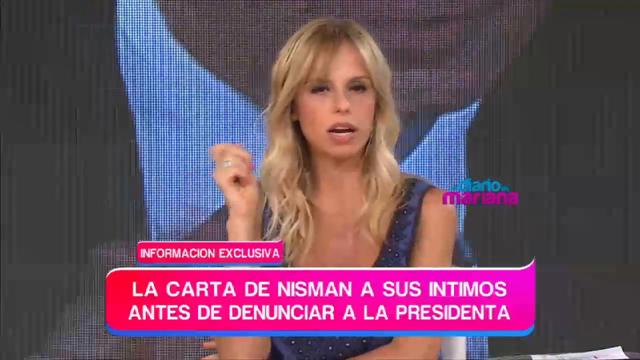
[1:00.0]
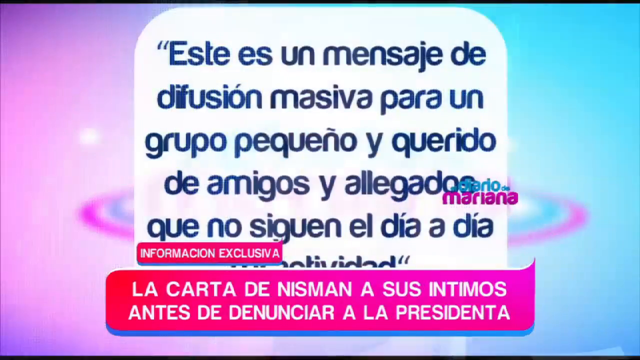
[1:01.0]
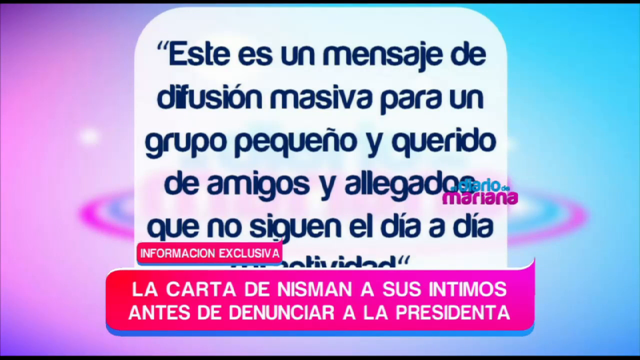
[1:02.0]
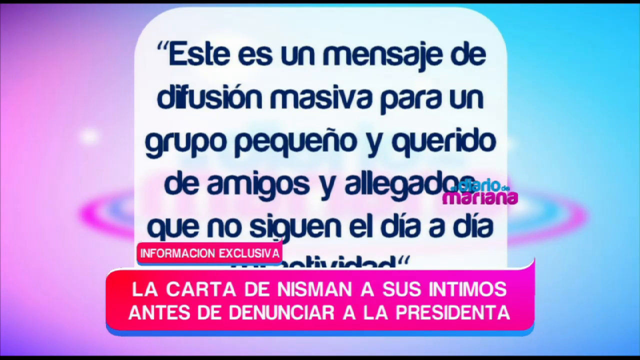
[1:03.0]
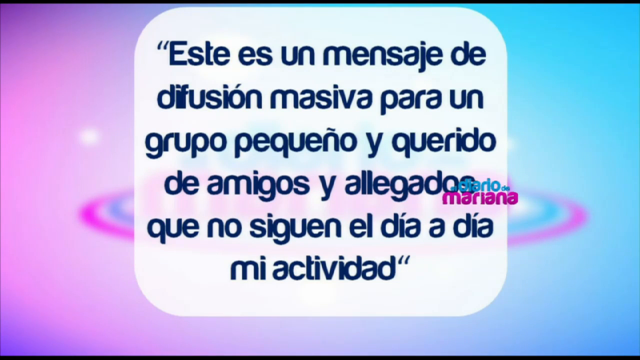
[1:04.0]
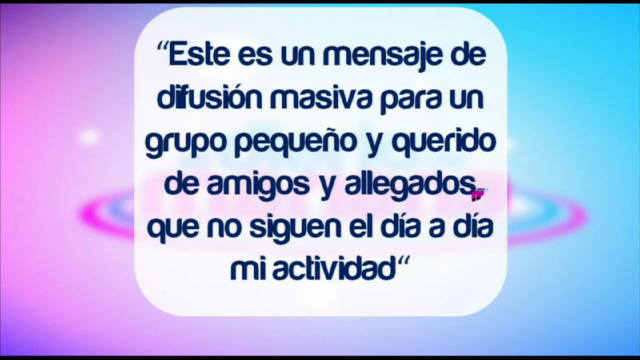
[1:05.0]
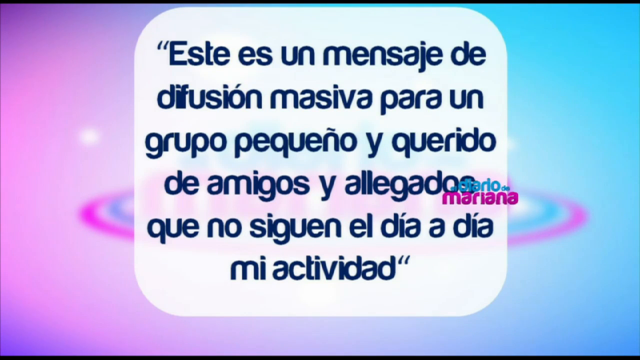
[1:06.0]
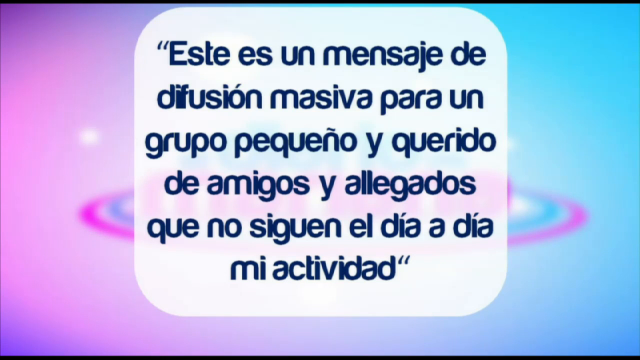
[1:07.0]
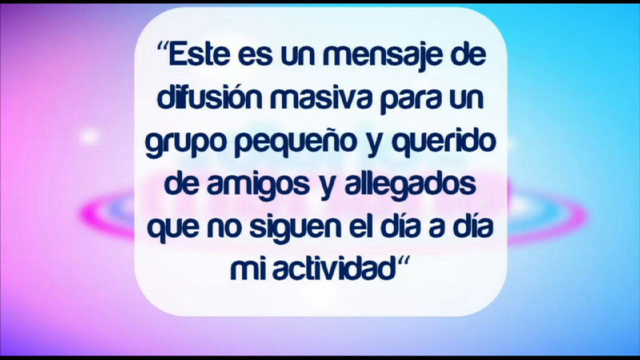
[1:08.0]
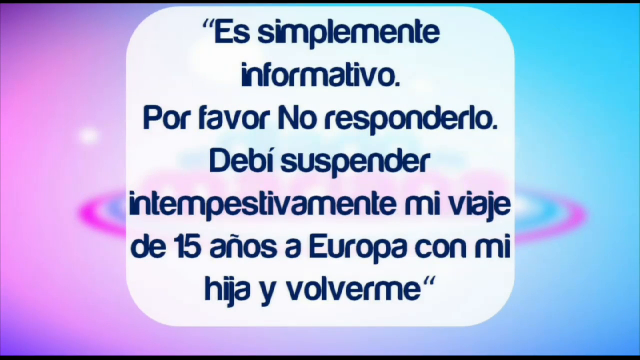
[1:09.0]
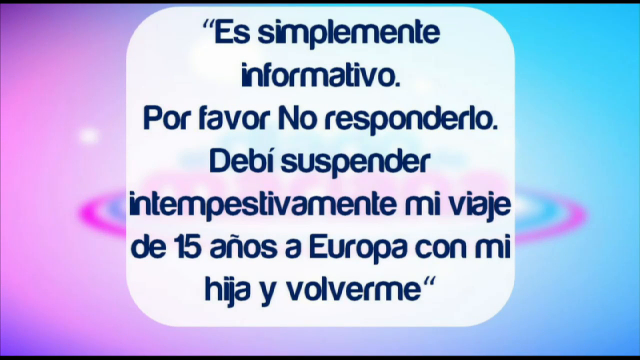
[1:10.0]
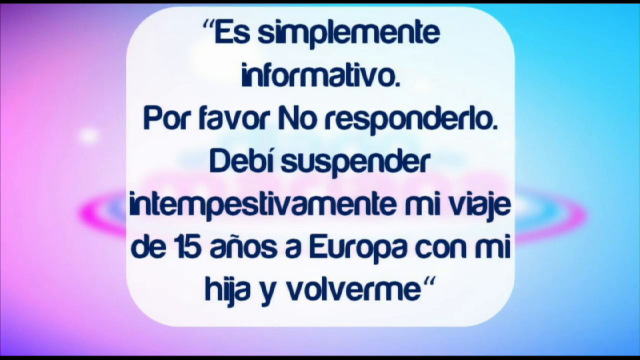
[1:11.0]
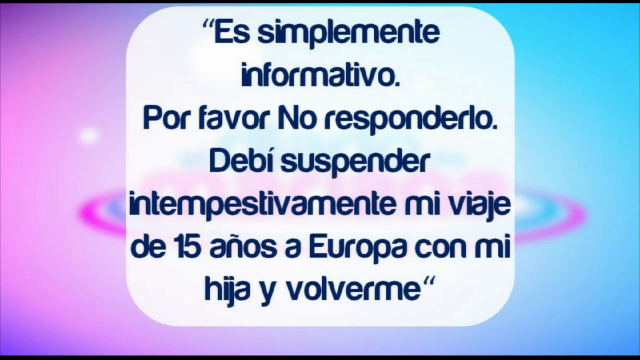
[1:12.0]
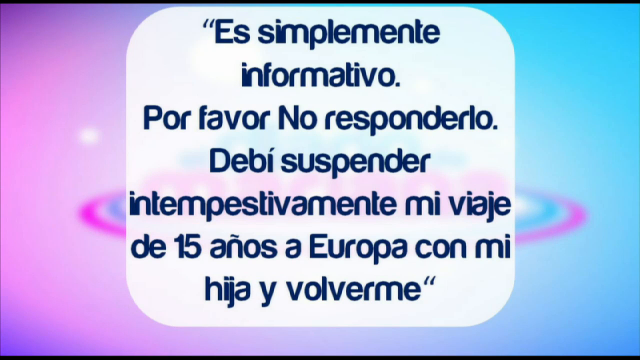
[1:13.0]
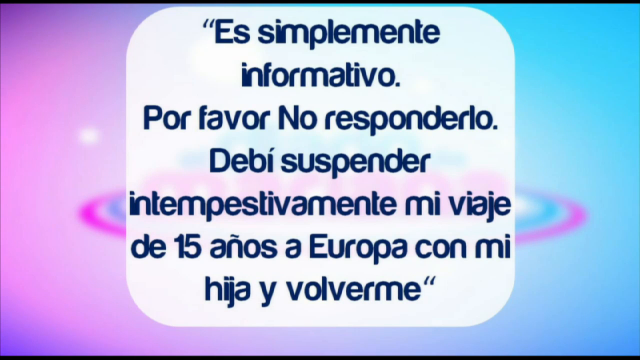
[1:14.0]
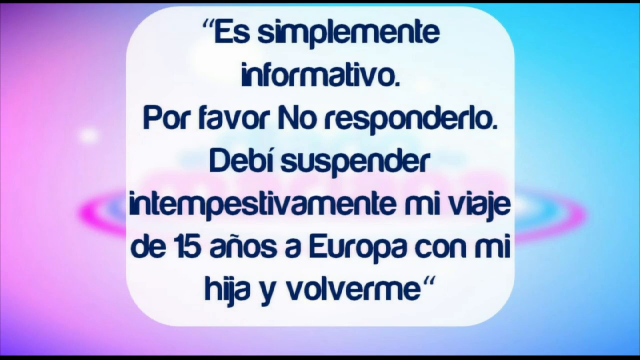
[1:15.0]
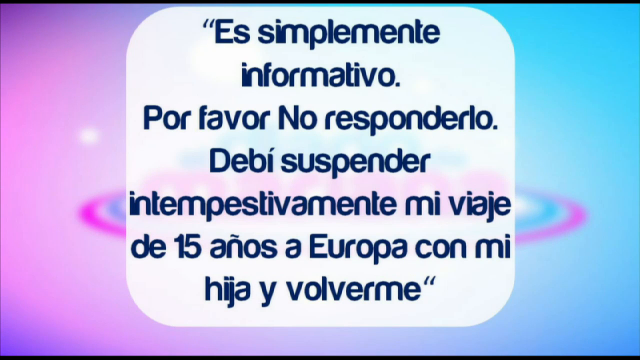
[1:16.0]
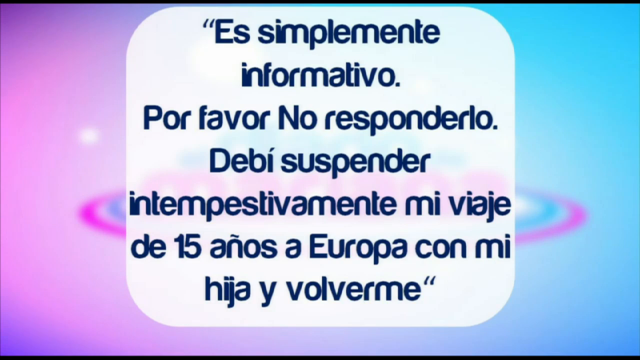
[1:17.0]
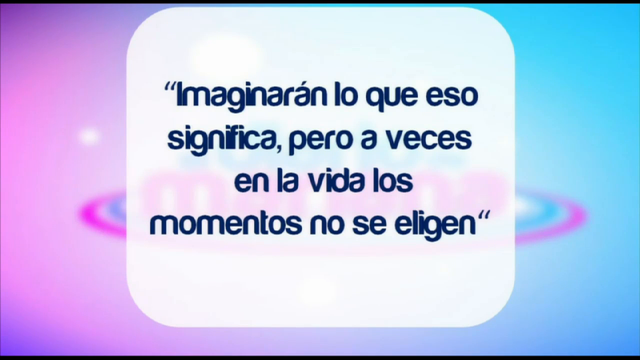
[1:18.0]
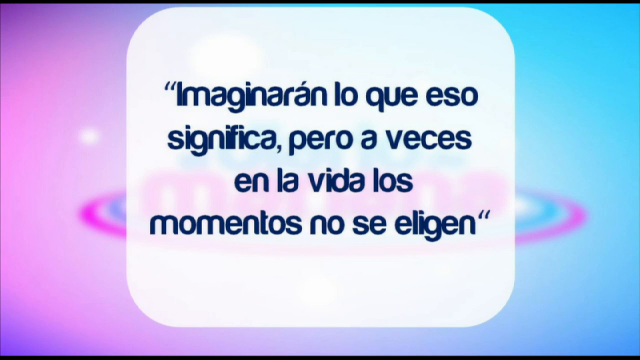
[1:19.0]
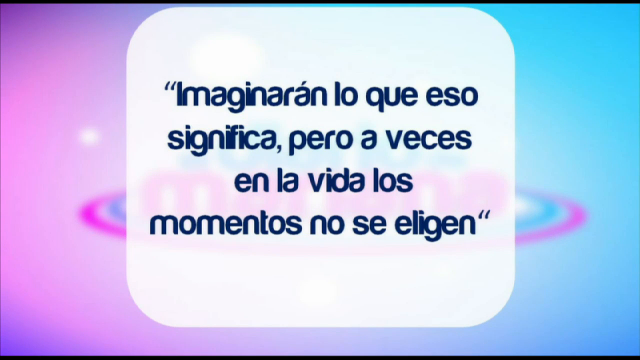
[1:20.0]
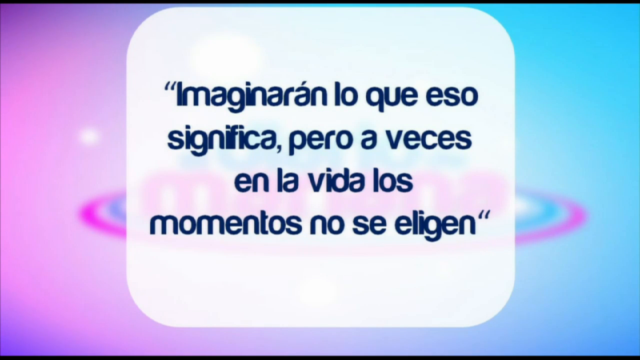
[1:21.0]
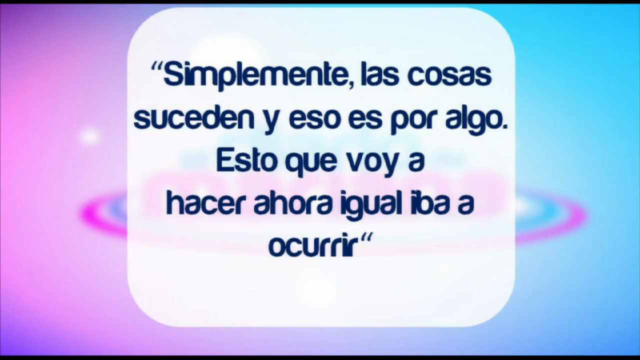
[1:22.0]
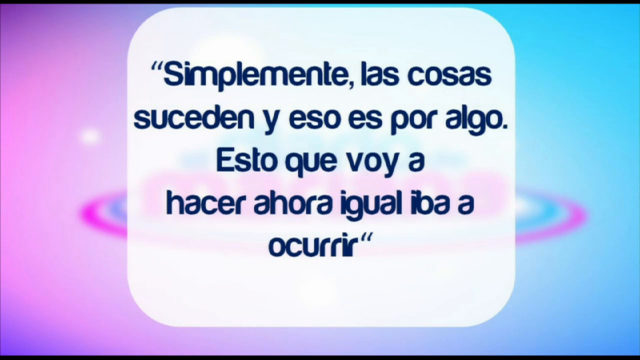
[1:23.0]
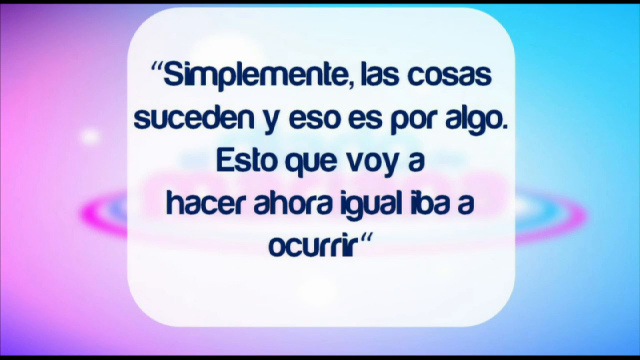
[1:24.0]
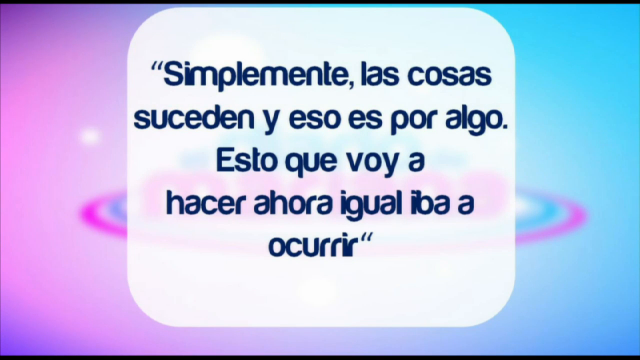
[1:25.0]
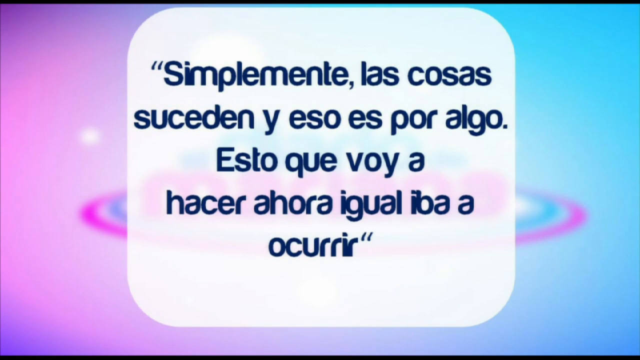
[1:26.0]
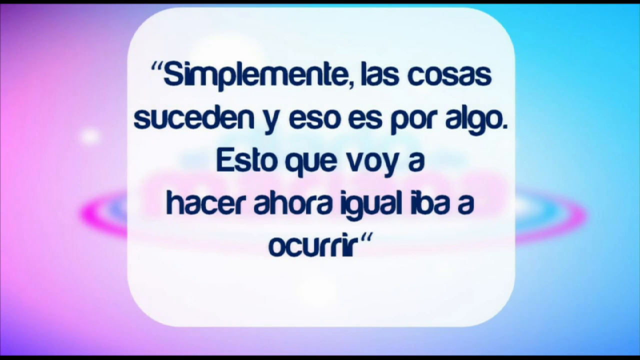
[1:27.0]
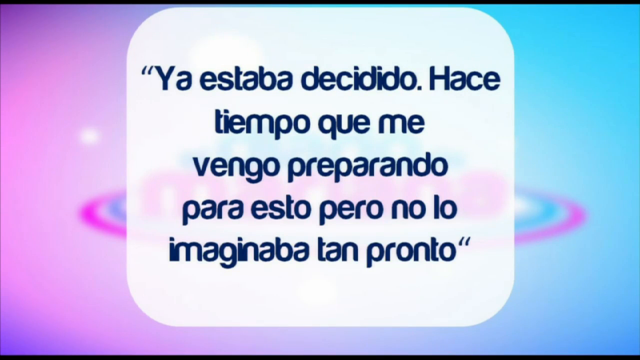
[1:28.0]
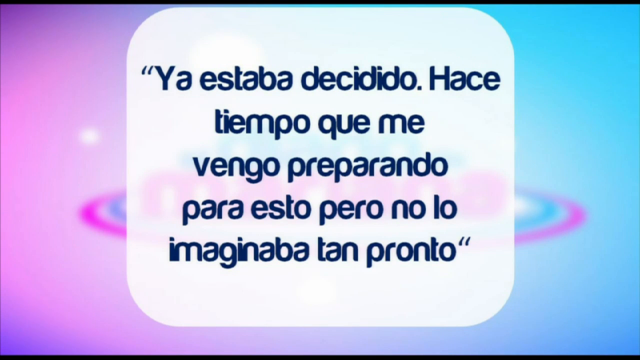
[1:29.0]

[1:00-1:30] The woman looks toward the camera and places her right hand on her chin. A large piece of text in Spanish then appears, looking like it was taken from an online page; the text is dark blue on a white background. A different set of Spanish text follows, also dark blue on white, with a two-colored background on the sides: light purple on the left and light blue on the right. The text changes several more times, each new set in Spanish and in dark blue on a white background.